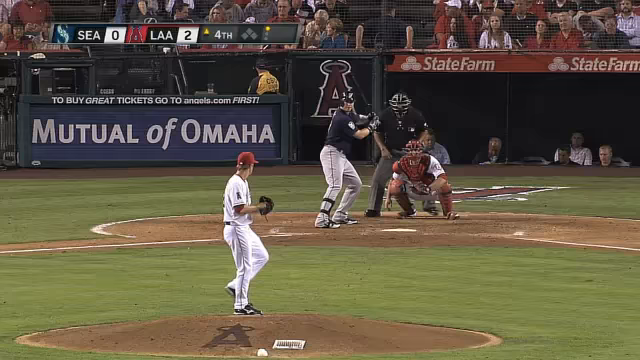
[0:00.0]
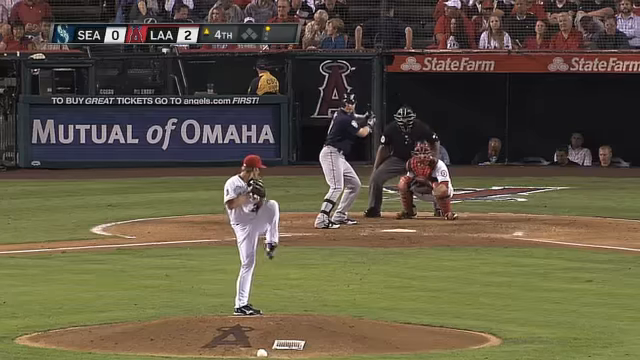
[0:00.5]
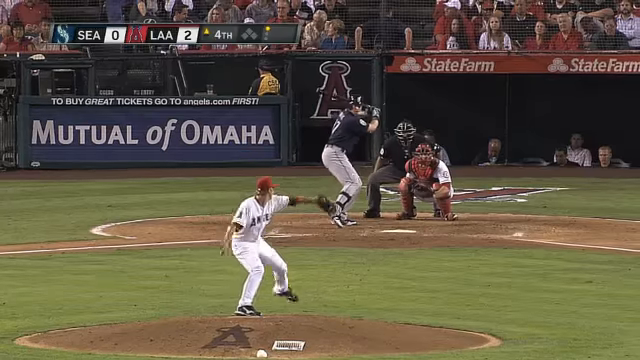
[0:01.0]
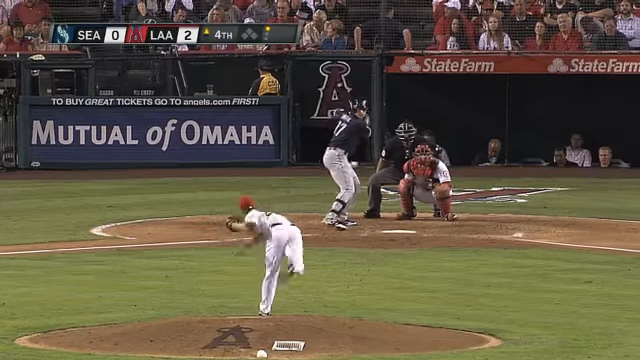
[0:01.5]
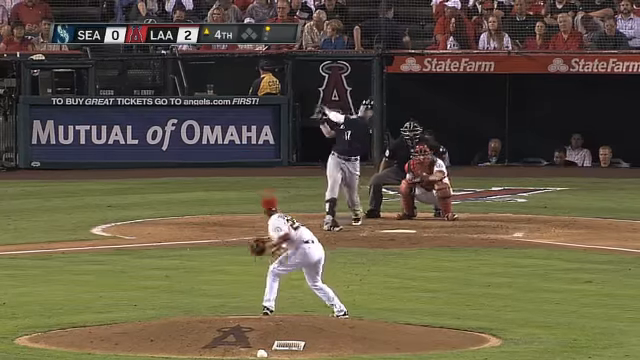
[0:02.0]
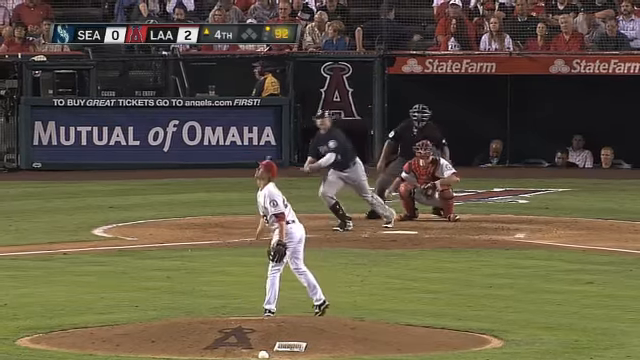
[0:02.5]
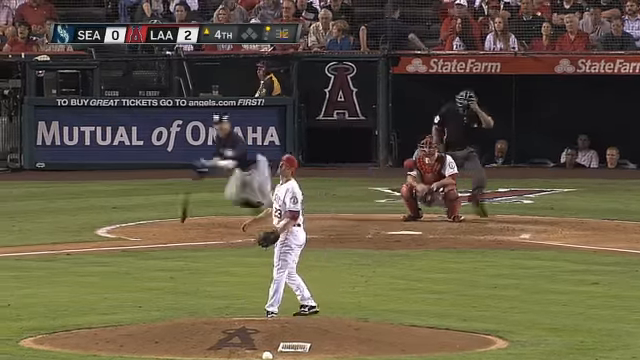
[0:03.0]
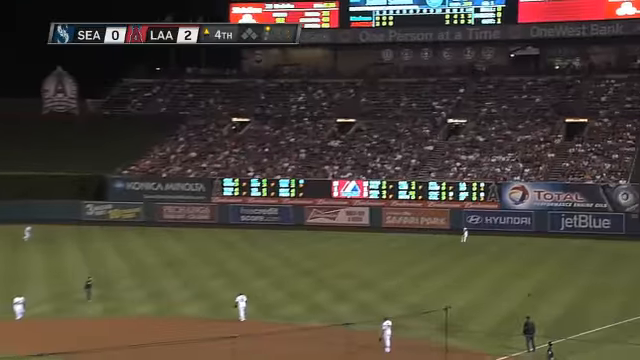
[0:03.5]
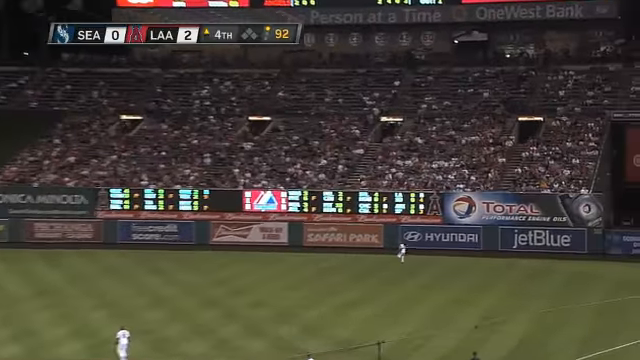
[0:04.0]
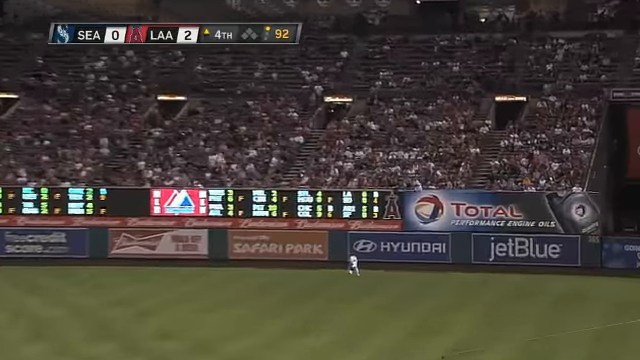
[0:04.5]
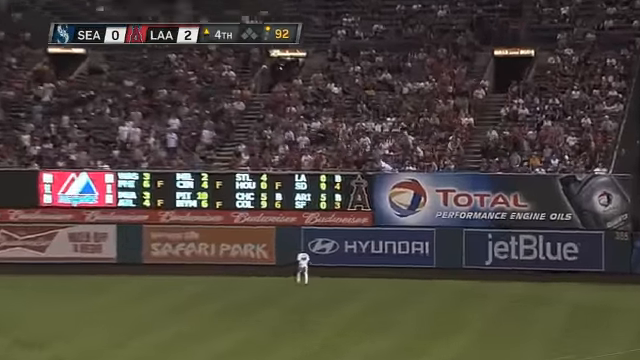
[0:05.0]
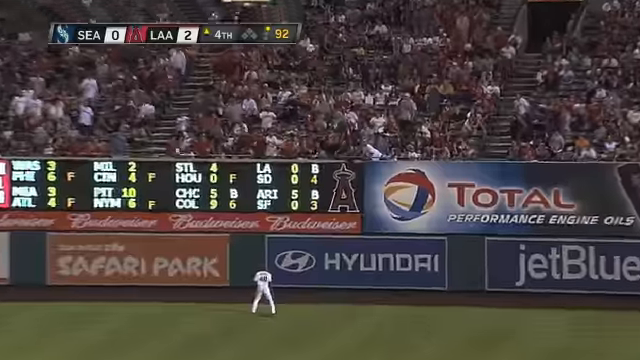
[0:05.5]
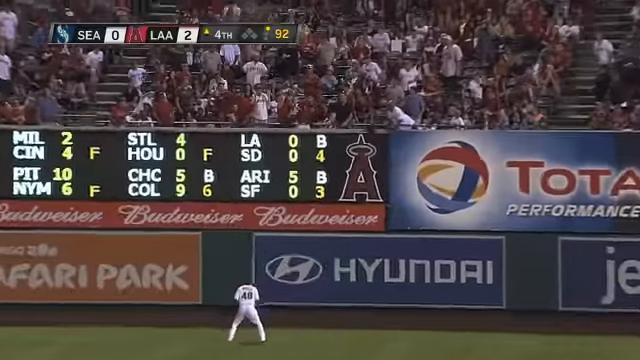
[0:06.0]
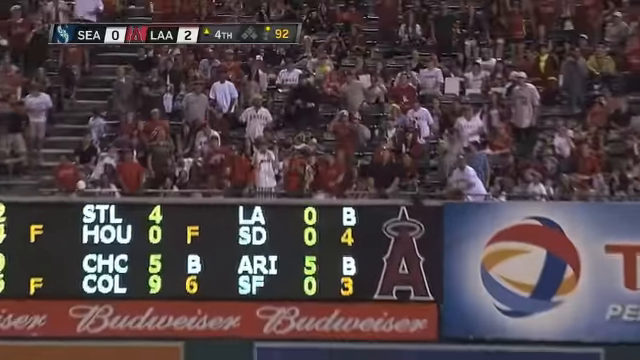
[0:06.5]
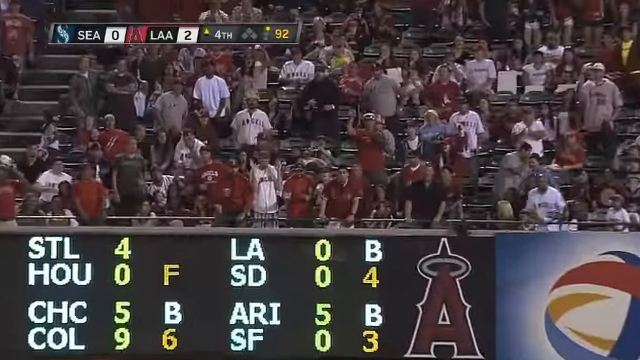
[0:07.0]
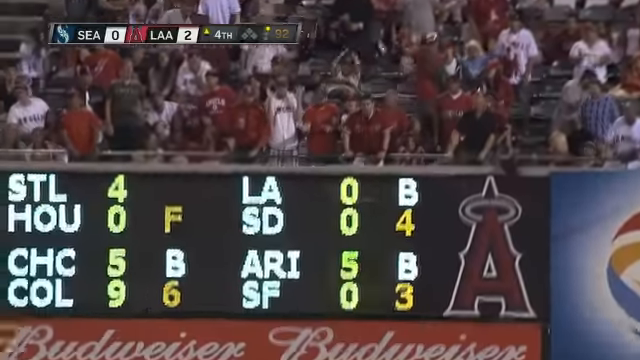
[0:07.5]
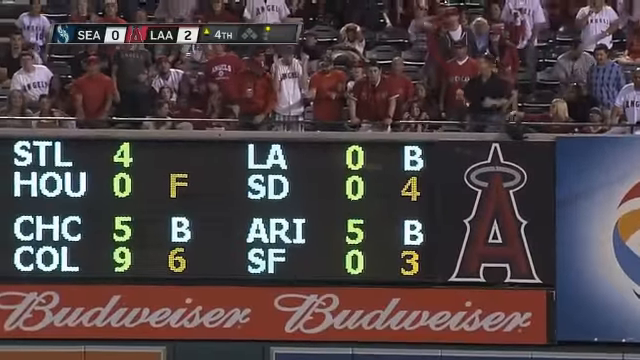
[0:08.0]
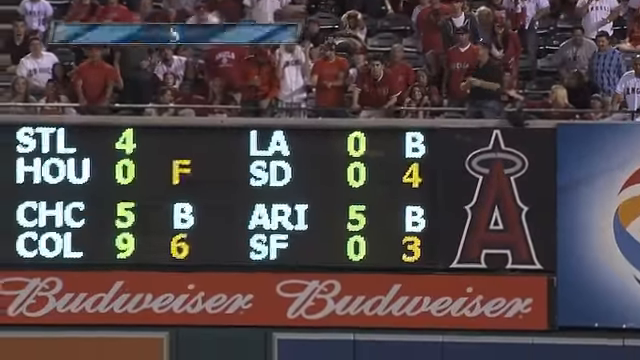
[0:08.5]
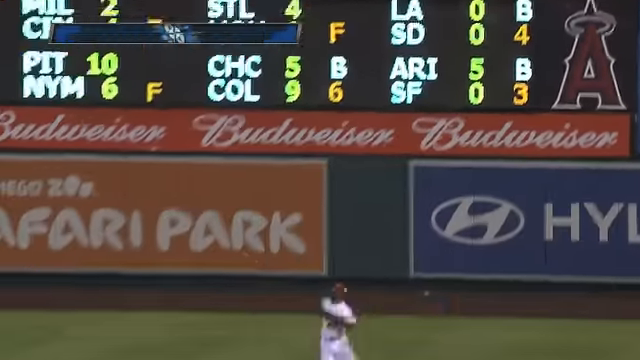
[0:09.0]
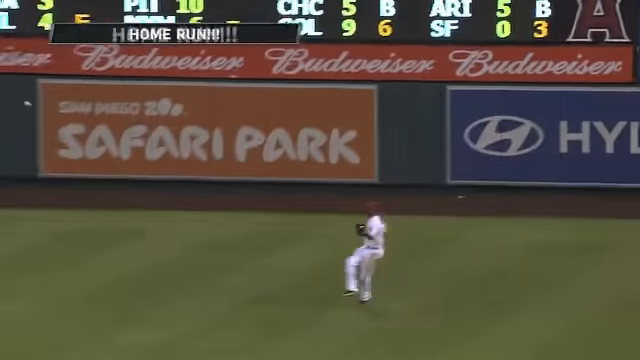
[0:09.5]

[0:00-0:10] A Major League Baseball game is underway. Graphics in the upper left-hand corner show Seattle versus the Los Angeles Angels, with the Angels winning two to nothing in the top of the fourth and nobody on base. The camera view comes in from center field, looking at the pitcher's mound and home plate. The Angels pitcher throws the ball home, and the batter swings and misses, then swings and hits a deep drive to right field. The outfielder has his back turned, looking at the wall. It is hard to tell, but the ball looks like it bounced off the wall, while the fans look like it is a home run. A small graphic says "home run". The outfielder grabs the ball and throws it in to second, and the shot cuts off, leaving it unclear what happened.